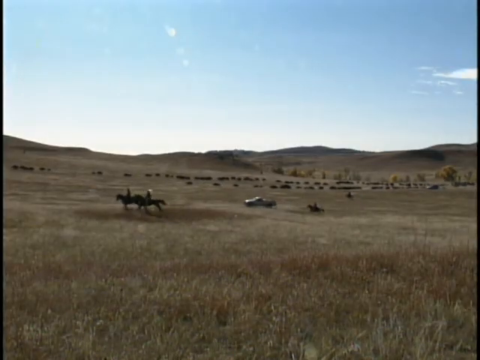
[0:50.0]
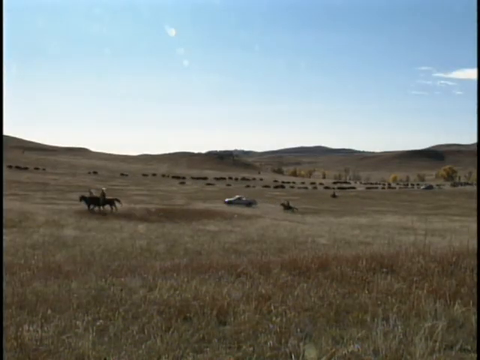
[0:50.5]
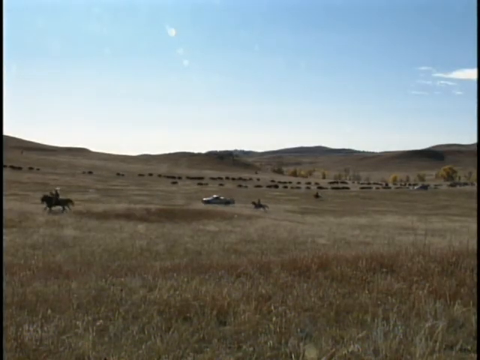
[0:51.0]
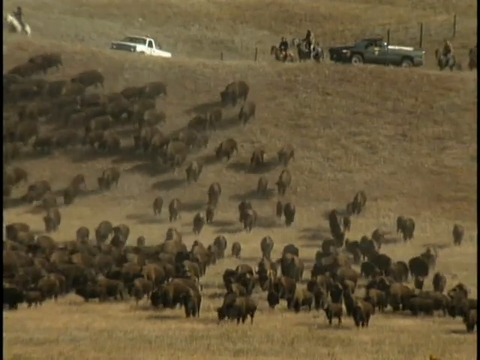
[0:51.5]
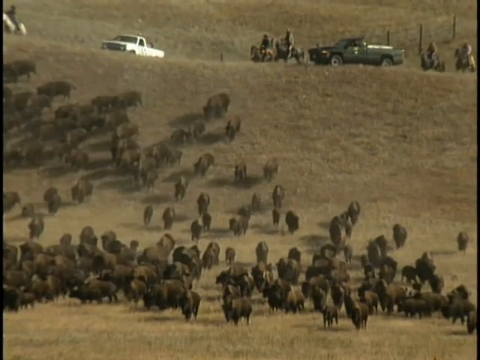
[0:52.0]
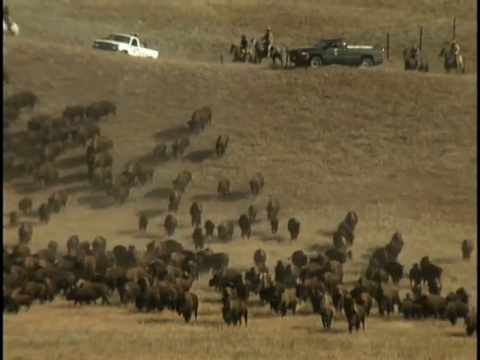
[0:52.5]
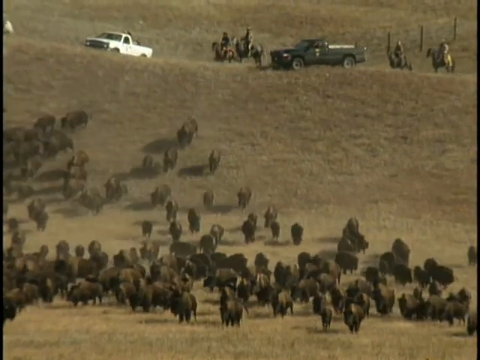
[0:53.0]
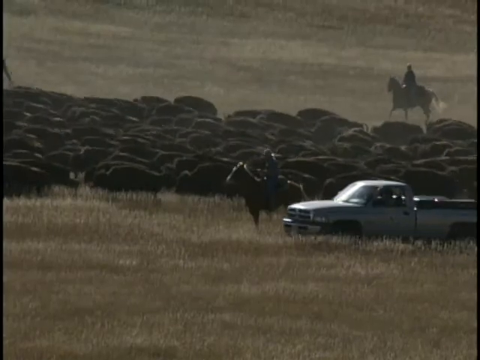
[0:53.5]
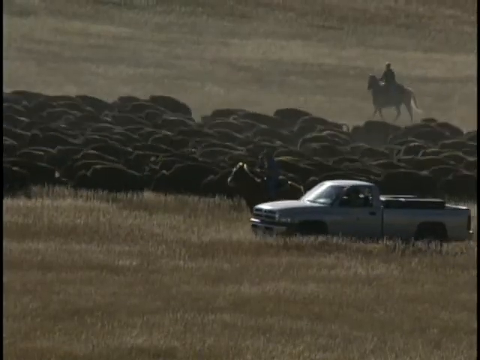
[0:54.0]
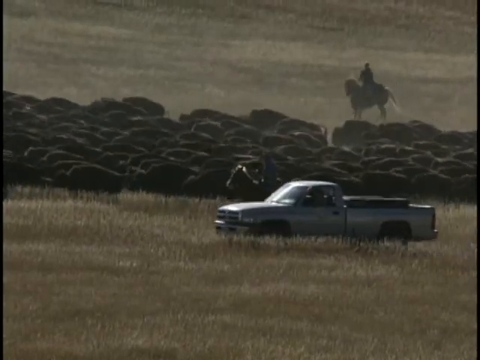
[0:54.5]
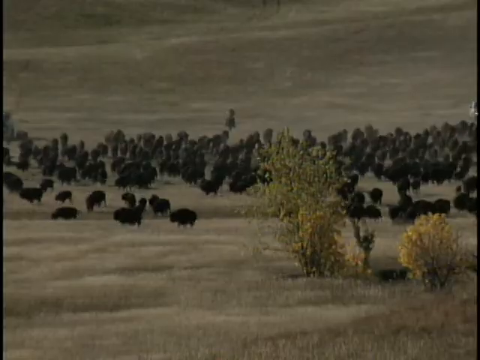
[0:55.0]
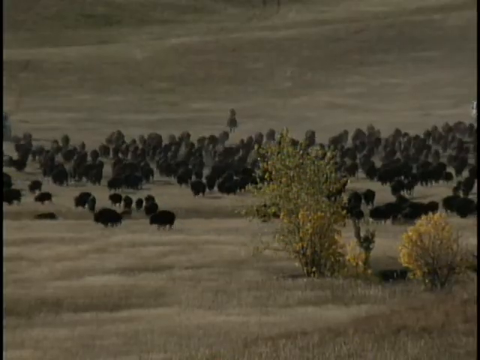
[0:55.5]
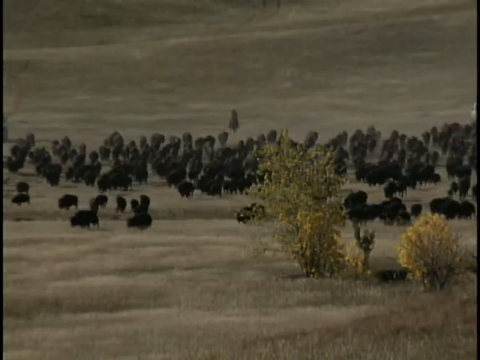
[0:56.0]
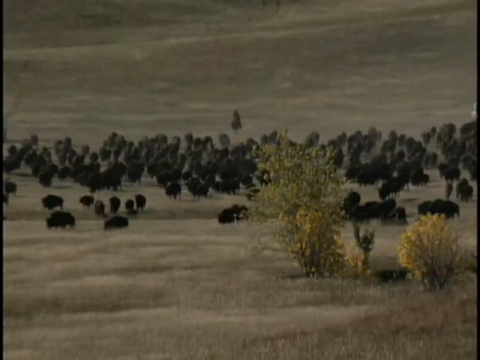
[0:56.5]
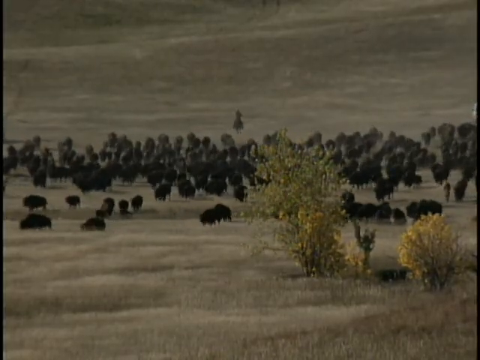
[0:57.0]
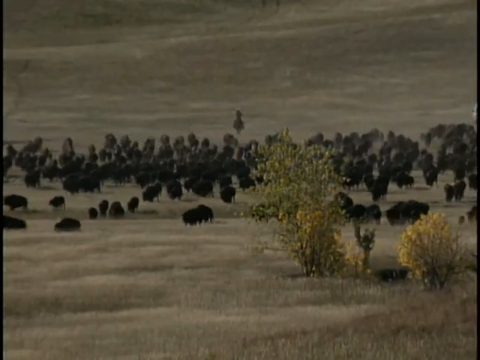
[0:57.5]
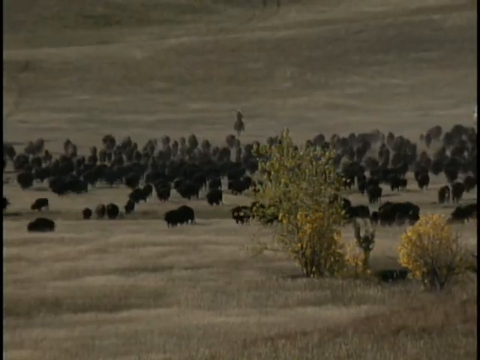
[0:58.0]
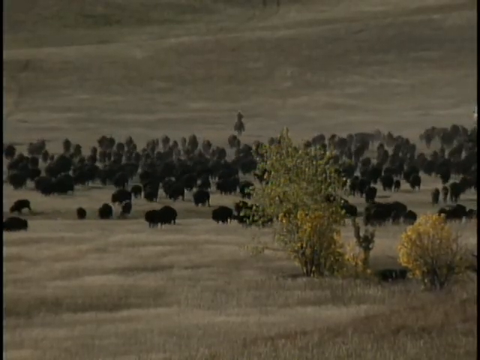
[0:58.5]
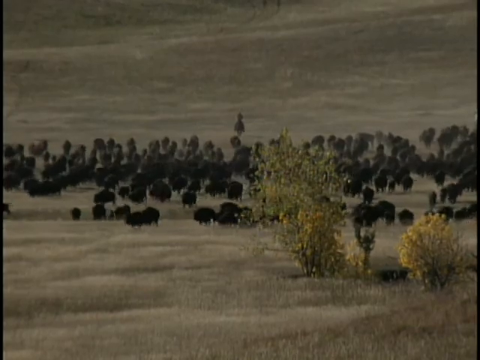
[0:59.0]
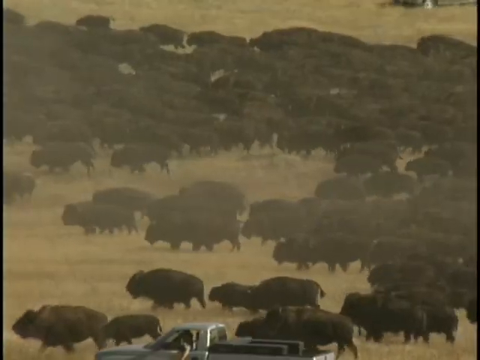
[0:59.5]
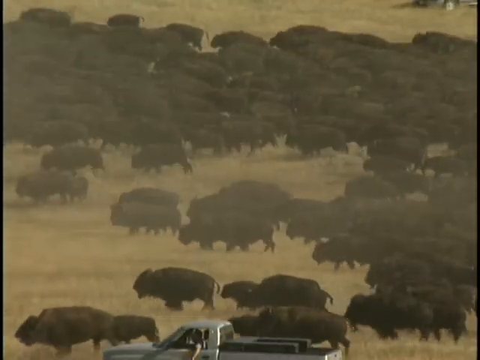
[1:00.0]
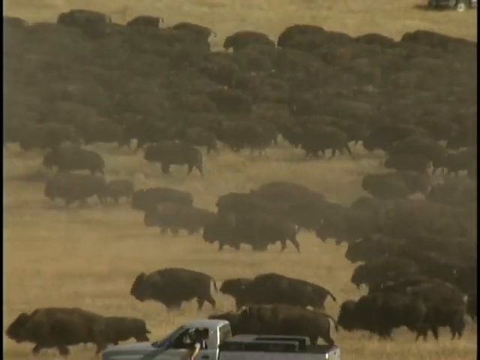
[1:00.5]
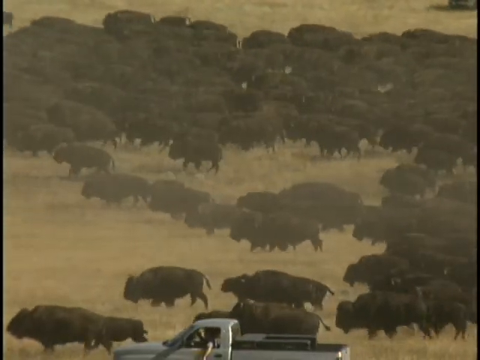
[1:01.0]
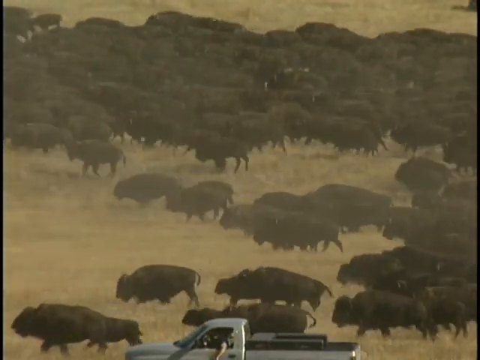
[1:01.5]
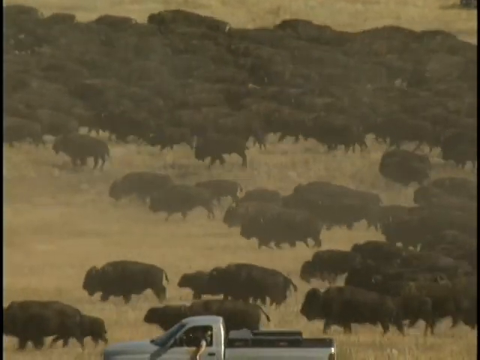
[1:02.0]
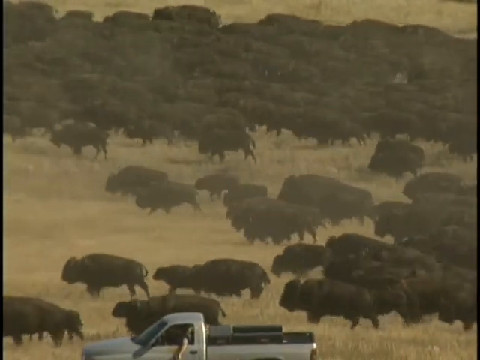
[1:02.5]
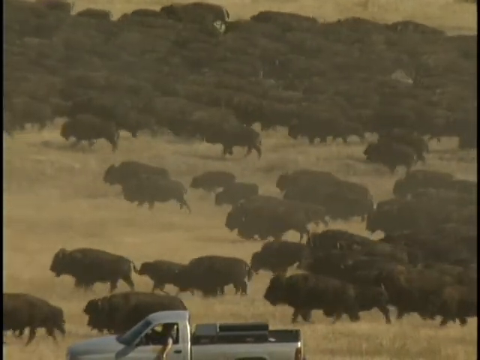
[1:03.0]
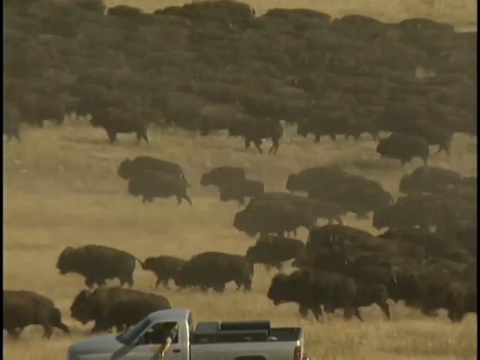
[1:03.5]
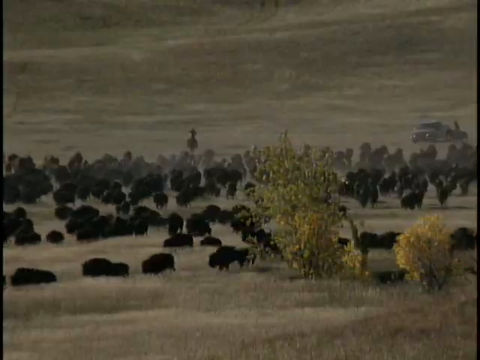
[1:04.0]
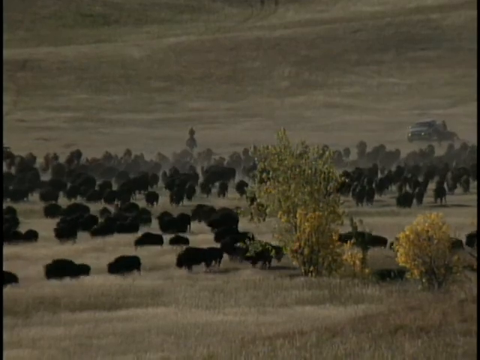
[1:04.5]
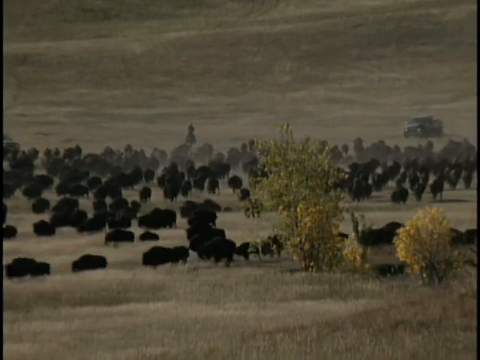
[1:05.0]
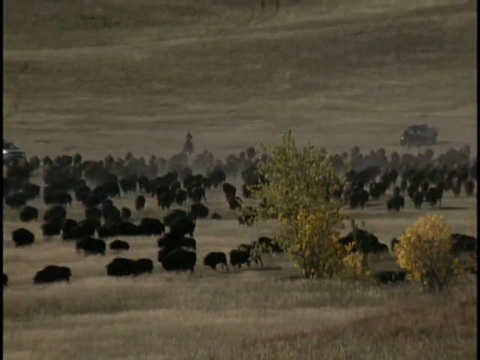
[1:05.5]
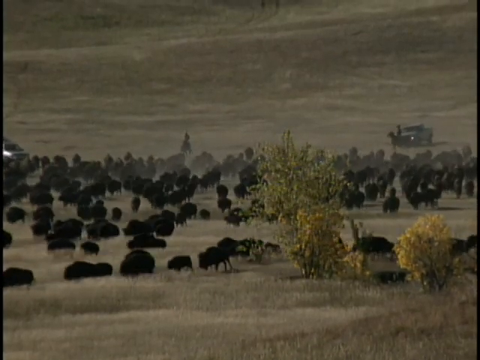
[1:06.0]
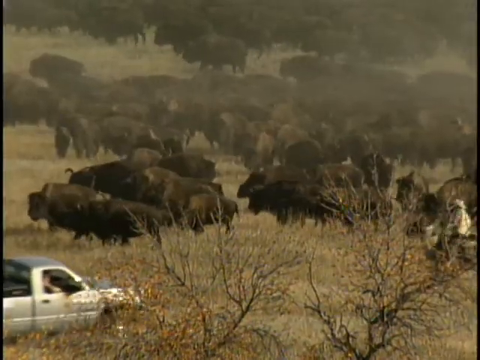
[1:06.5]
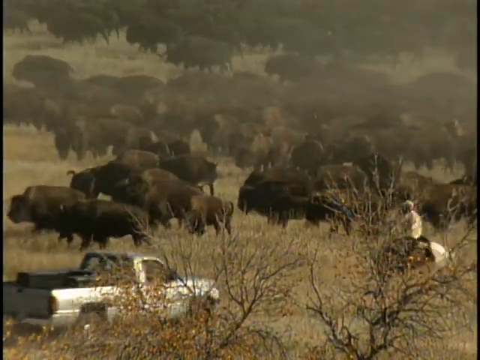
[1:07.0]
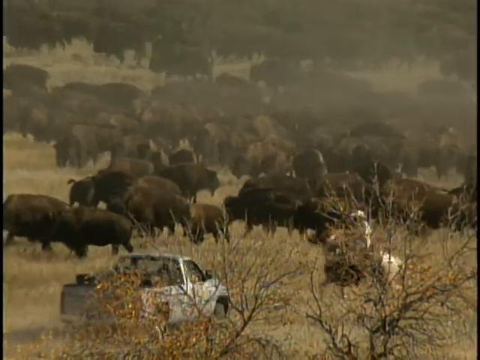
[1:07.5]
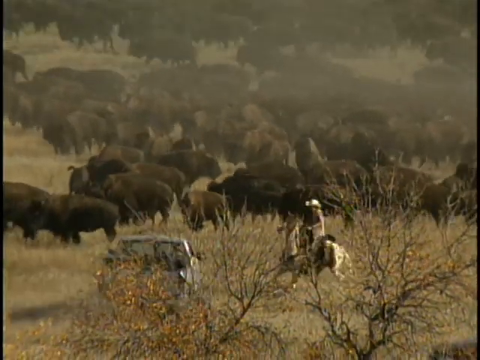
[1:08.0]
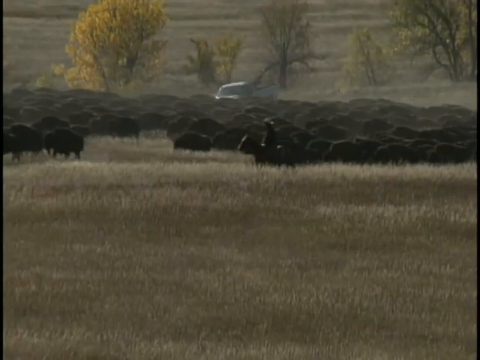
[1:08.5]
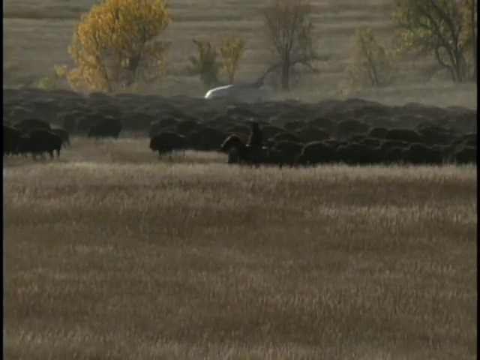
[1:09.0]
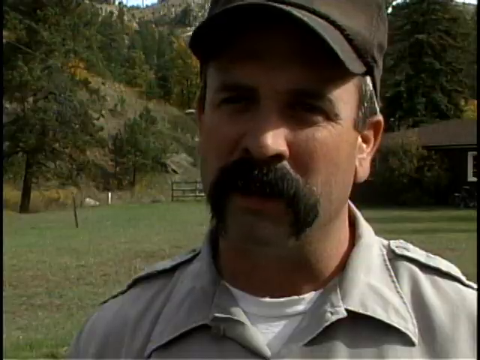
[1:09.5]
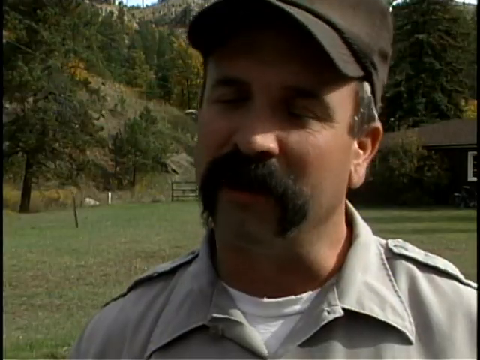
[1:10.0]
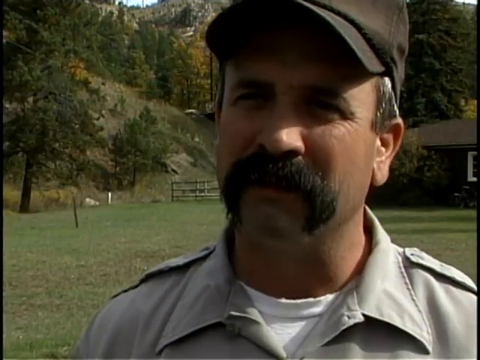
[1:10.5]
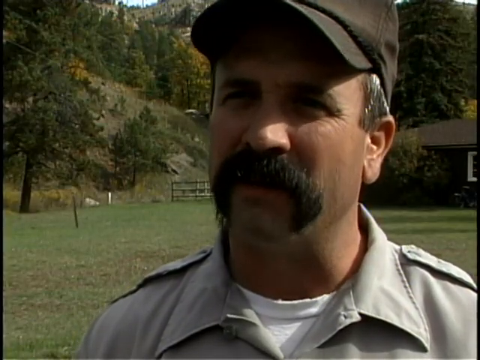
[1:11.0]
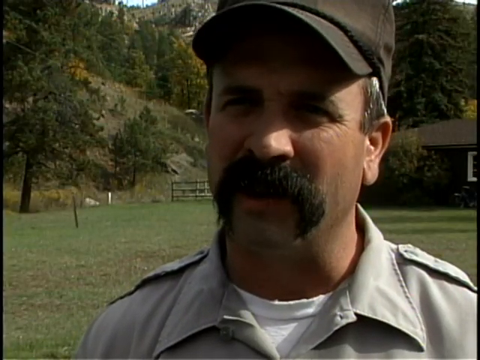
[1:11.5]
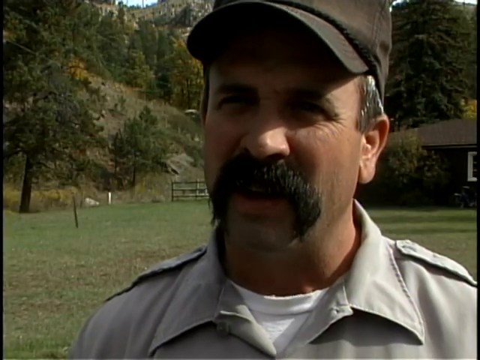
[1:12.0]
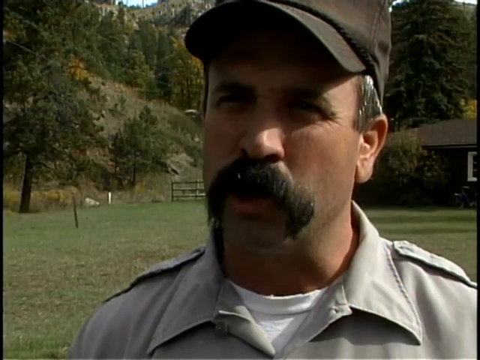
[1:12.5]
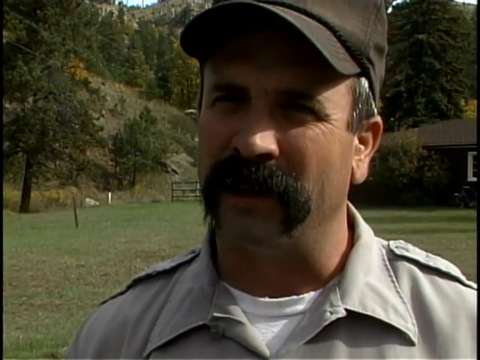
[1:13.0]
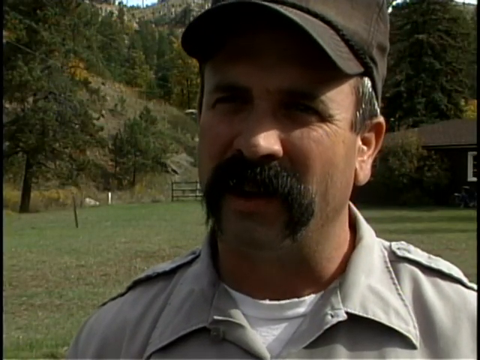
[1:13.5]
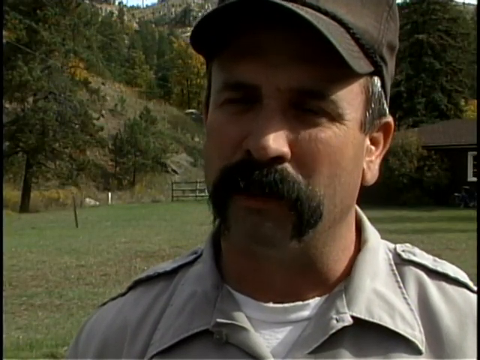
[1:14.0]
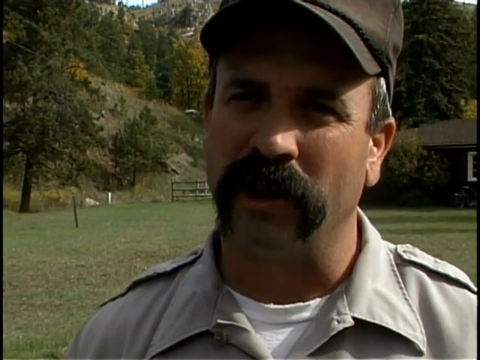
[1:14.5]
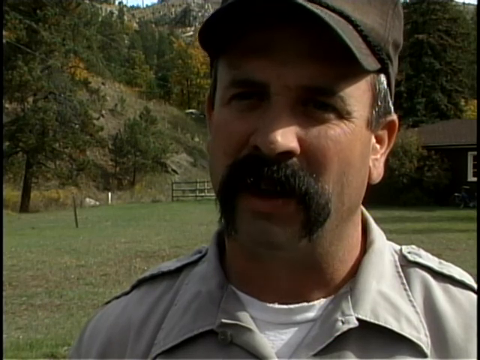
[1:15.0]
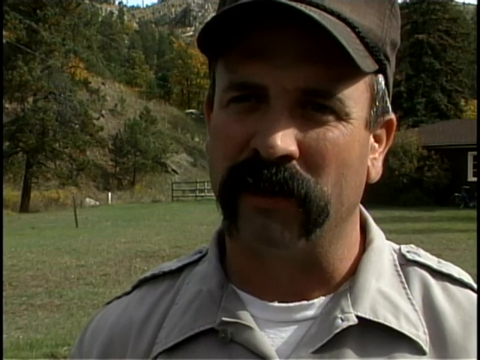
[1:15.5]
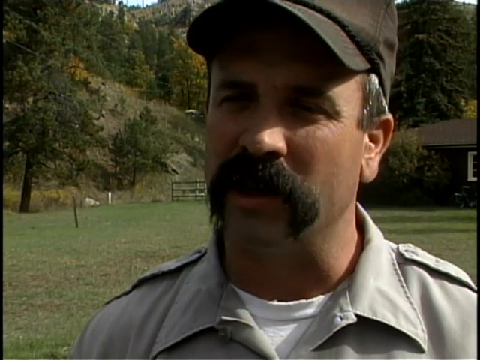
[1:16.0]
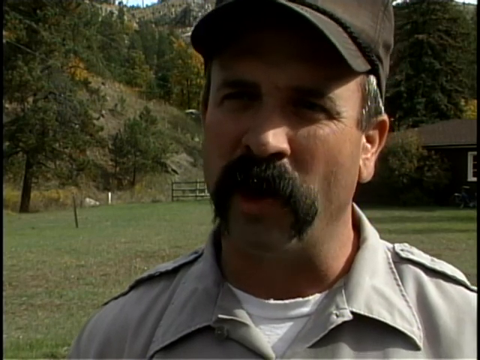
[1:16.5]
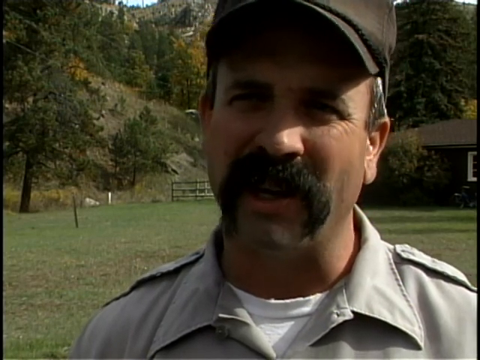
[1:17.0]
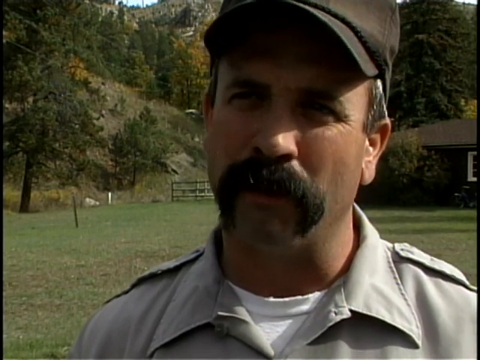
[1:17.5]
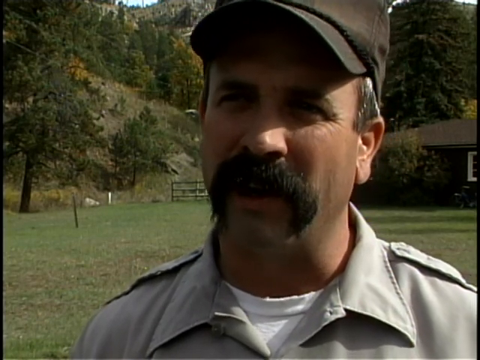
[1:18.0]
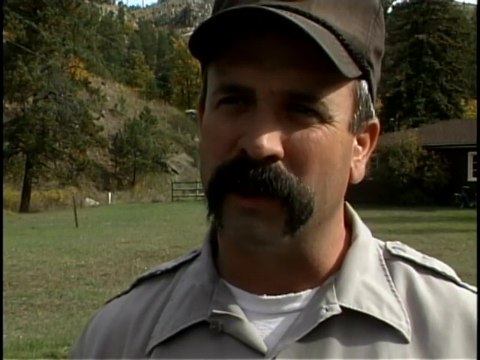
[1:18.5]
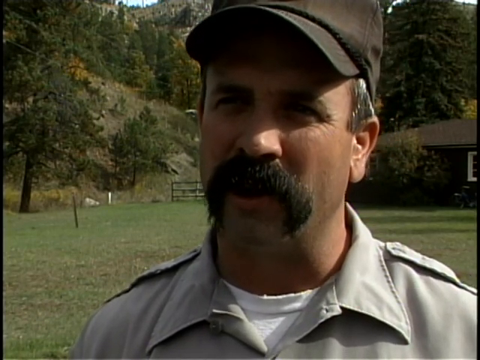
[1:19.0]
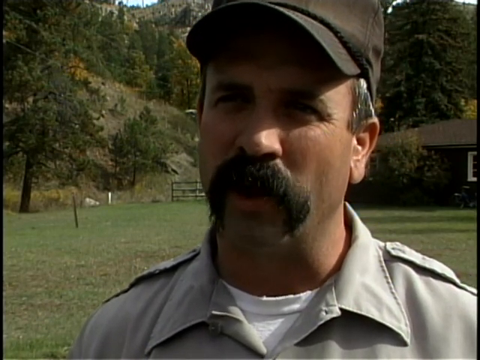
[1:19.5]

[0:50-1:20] A large herd of black animals is on a large tract of land. They look like animals that are reared in the area rather than wild animals. Men on white horses direct the herd, and pickups also direct the animals, leading them somewhere specific. A large stretch of land is in the background. The animals run very fast, leaving dust behind that even covers the screen. The video then focuses on another man, who walks through the camera's view, appears to be wearing a cap, and looks very serious as he addresses the camera.